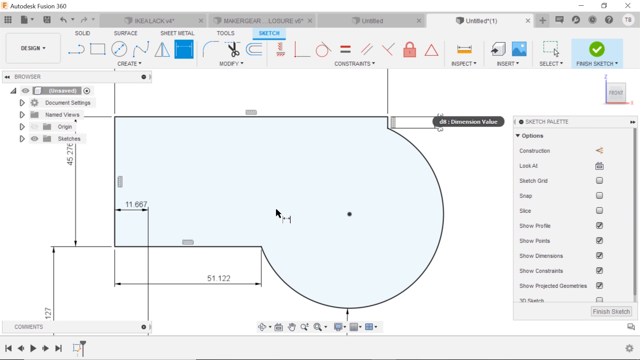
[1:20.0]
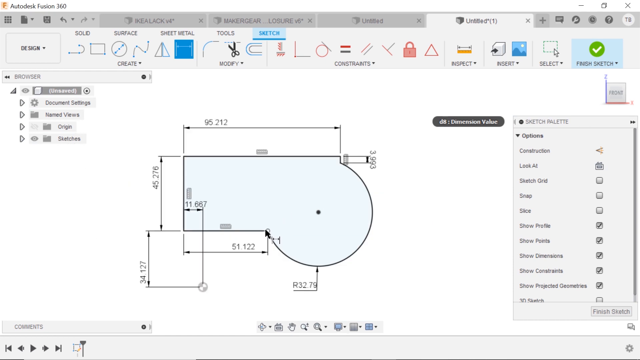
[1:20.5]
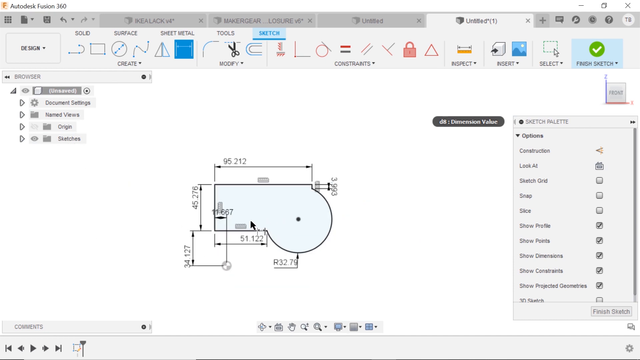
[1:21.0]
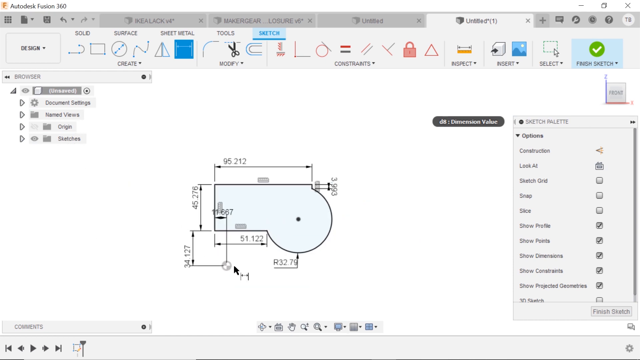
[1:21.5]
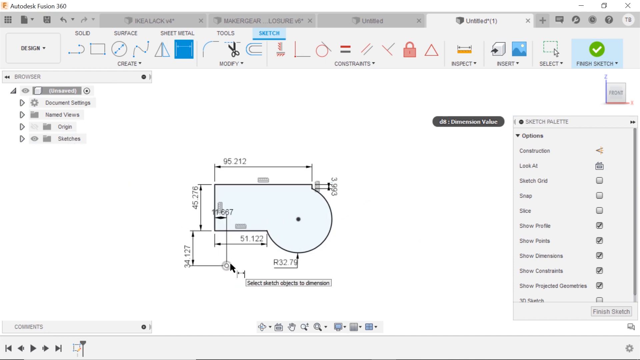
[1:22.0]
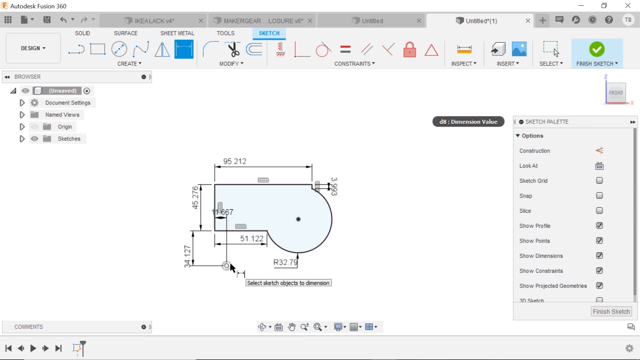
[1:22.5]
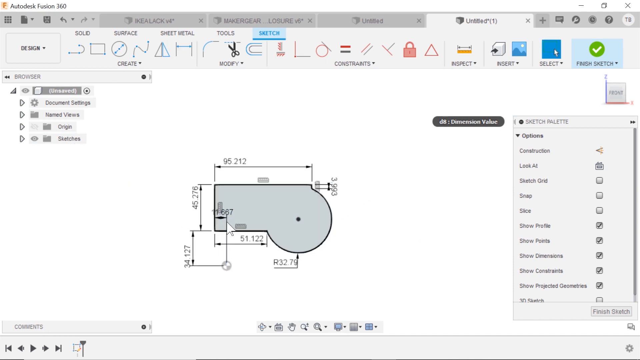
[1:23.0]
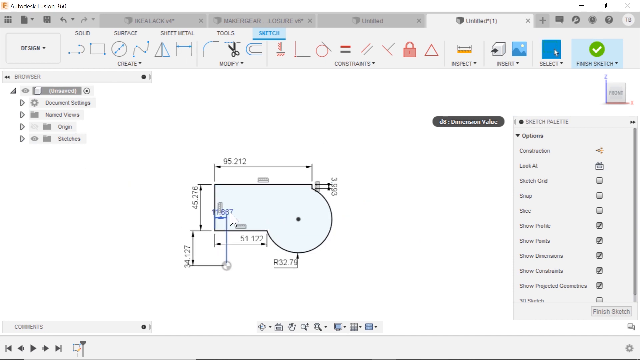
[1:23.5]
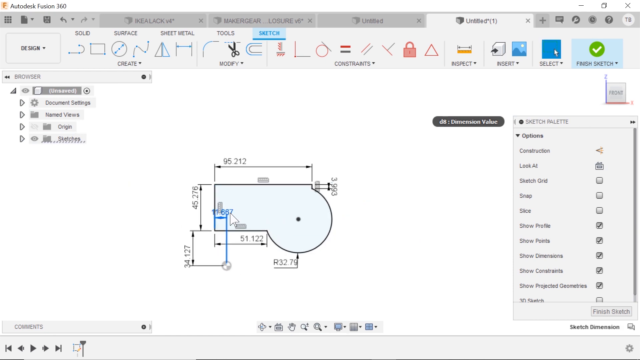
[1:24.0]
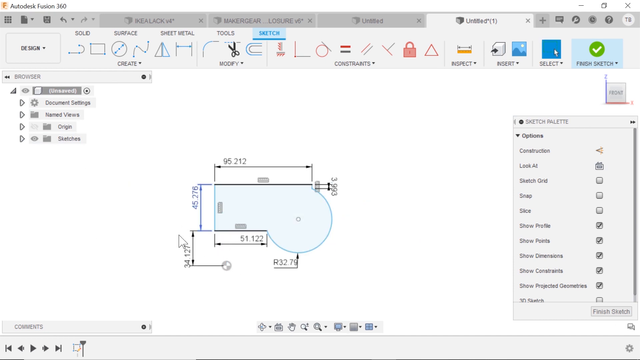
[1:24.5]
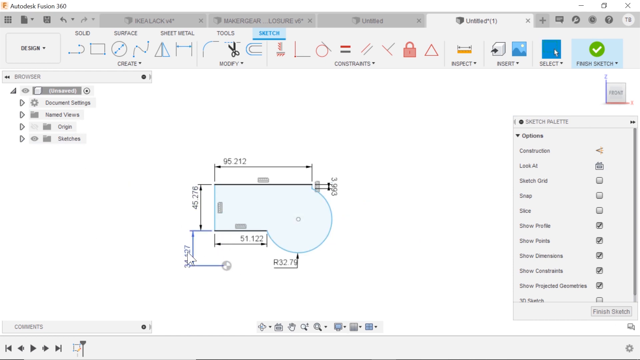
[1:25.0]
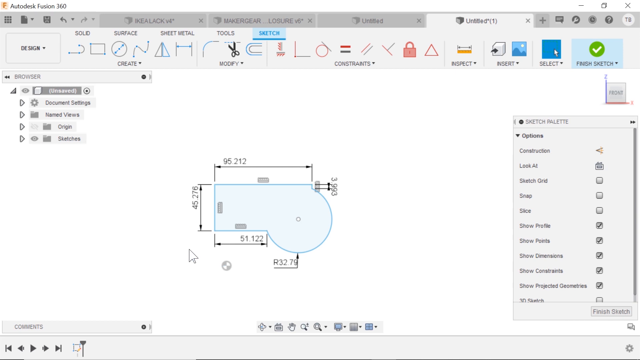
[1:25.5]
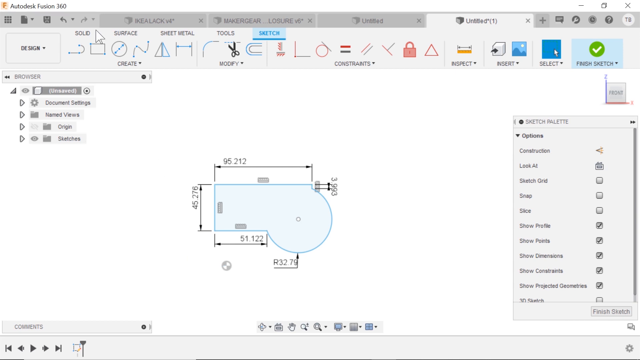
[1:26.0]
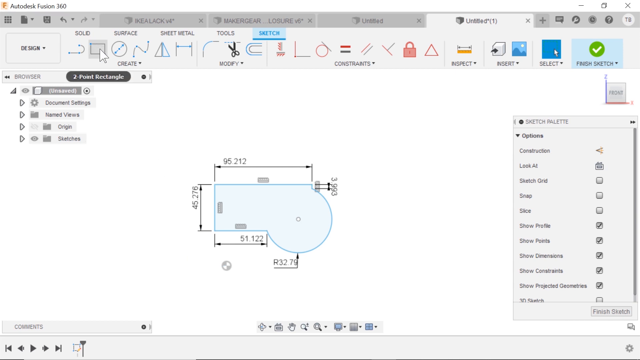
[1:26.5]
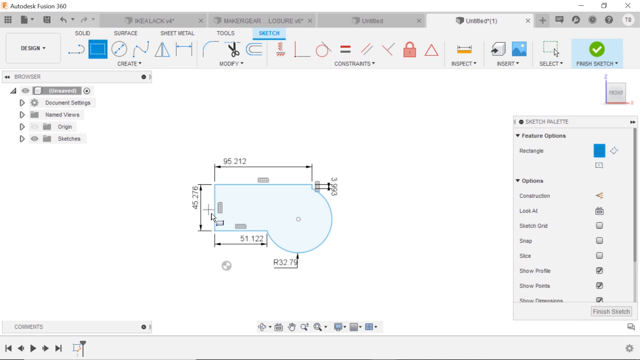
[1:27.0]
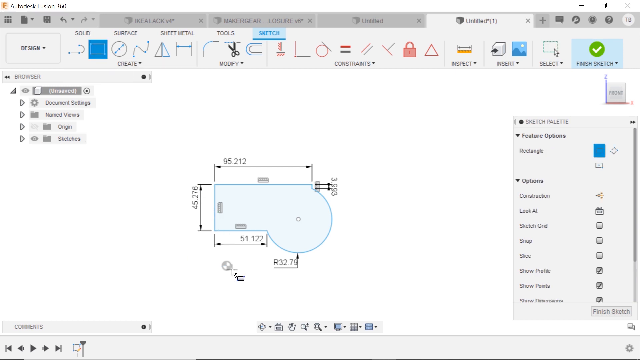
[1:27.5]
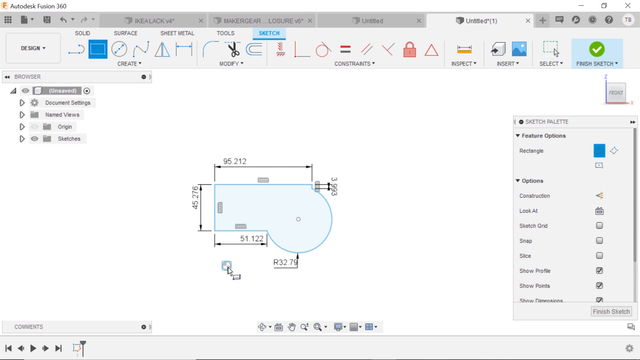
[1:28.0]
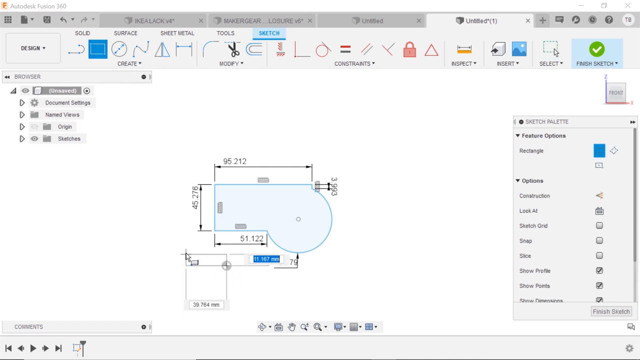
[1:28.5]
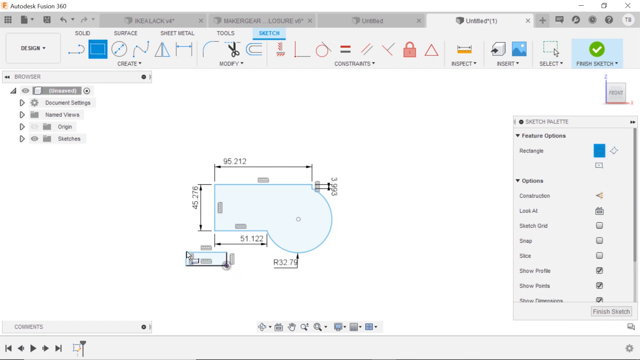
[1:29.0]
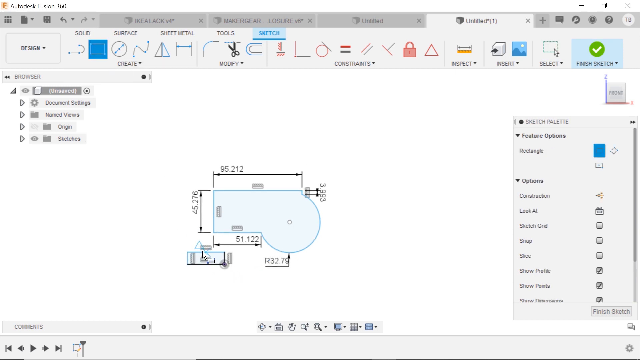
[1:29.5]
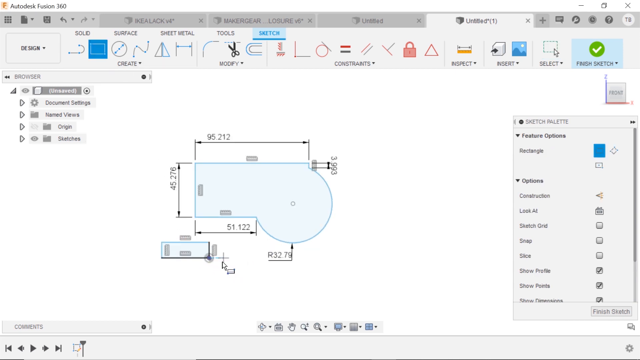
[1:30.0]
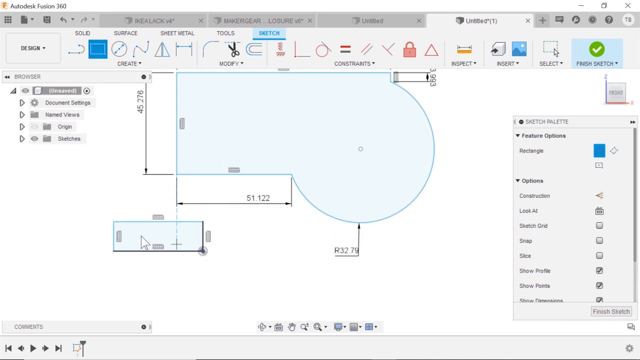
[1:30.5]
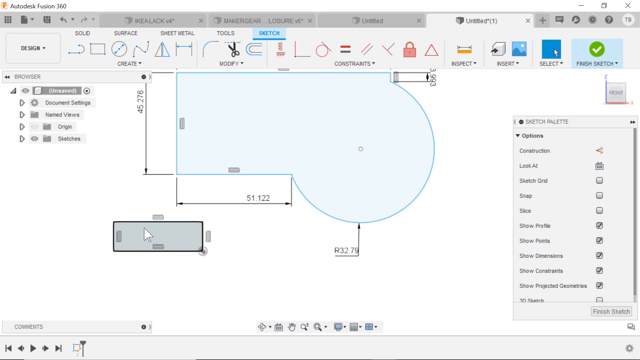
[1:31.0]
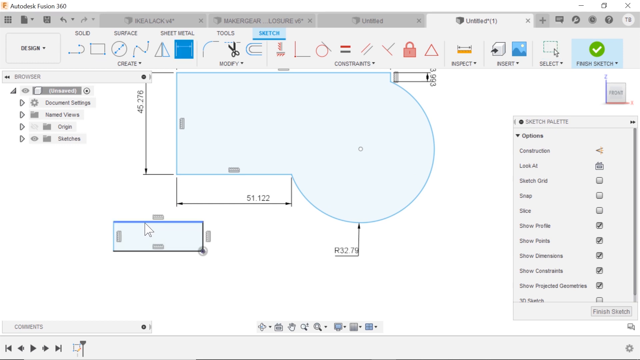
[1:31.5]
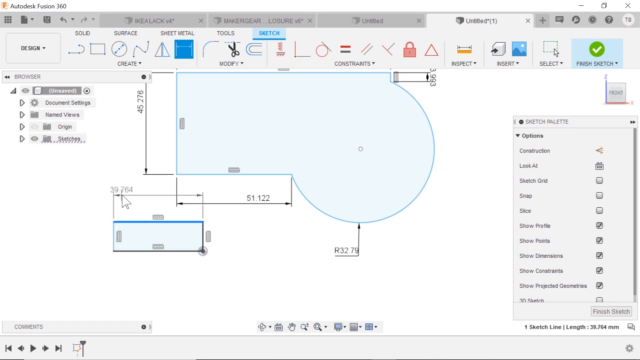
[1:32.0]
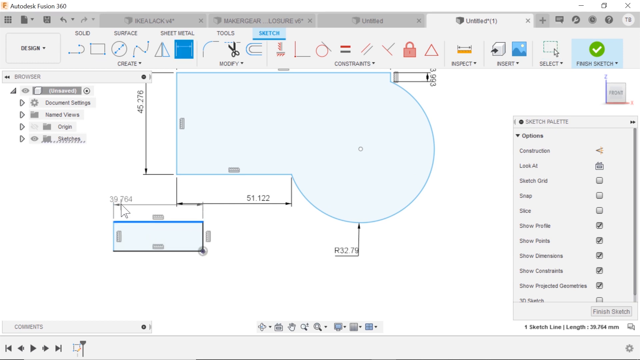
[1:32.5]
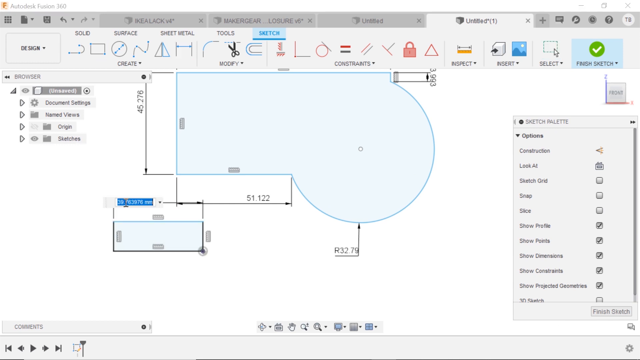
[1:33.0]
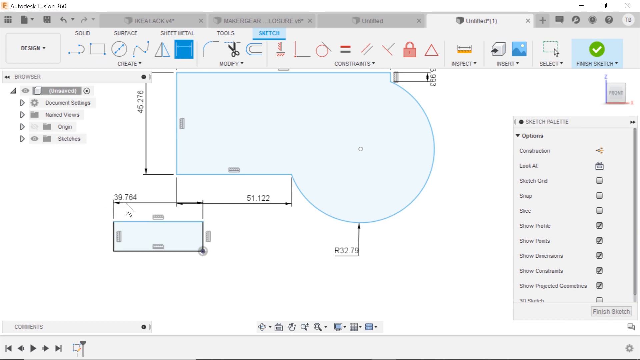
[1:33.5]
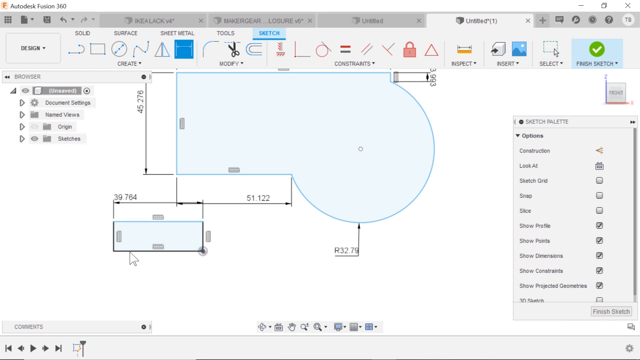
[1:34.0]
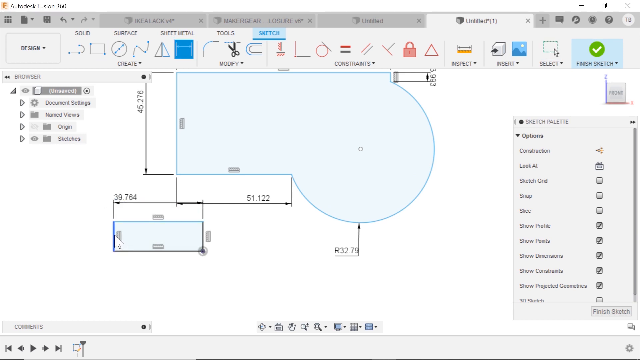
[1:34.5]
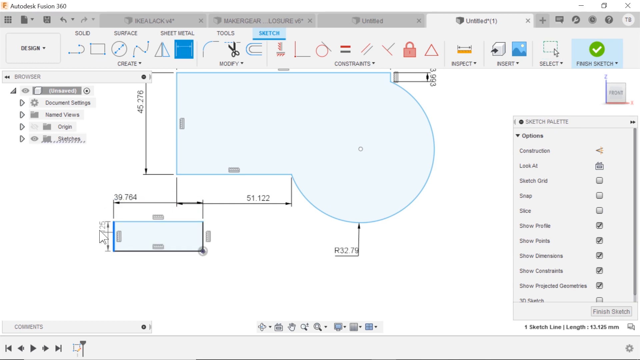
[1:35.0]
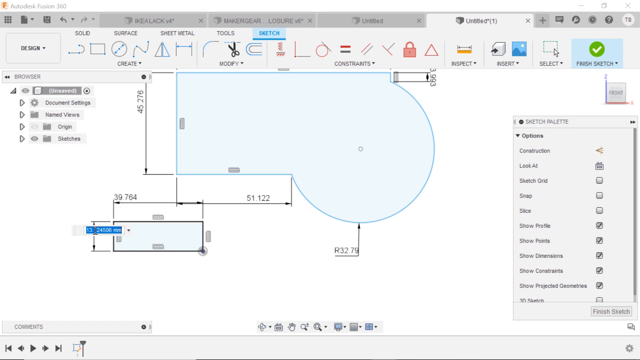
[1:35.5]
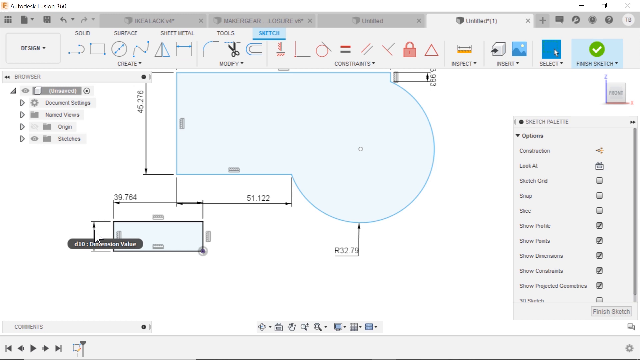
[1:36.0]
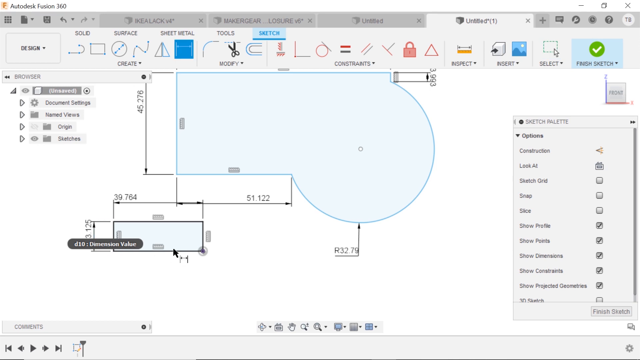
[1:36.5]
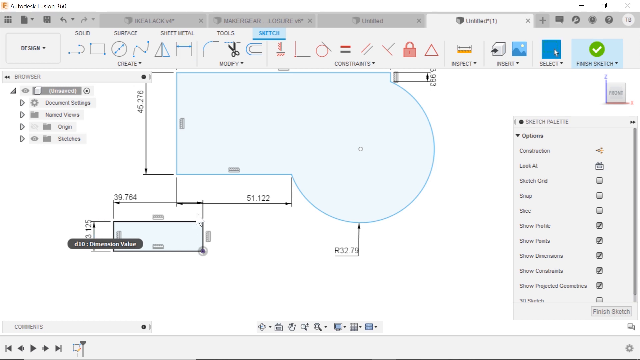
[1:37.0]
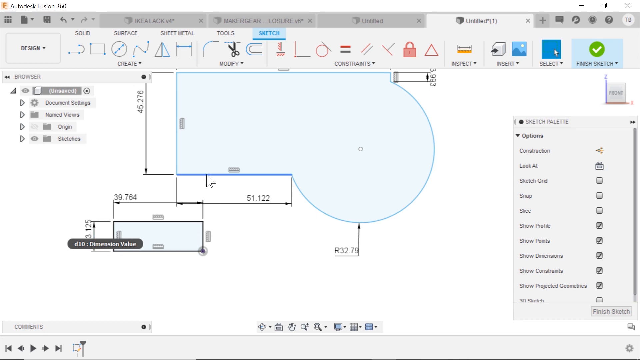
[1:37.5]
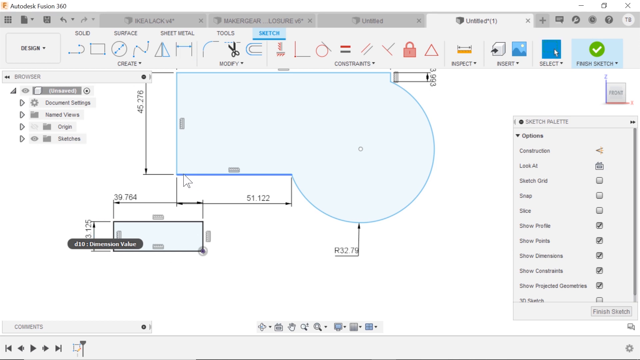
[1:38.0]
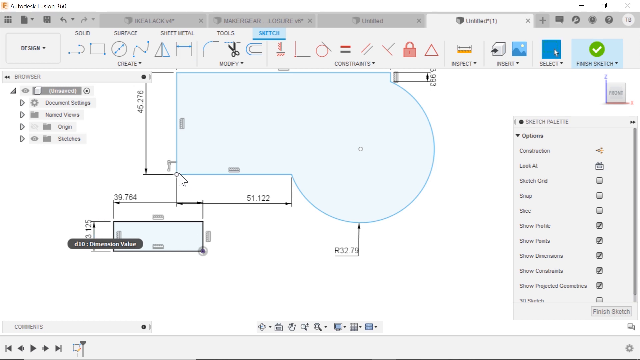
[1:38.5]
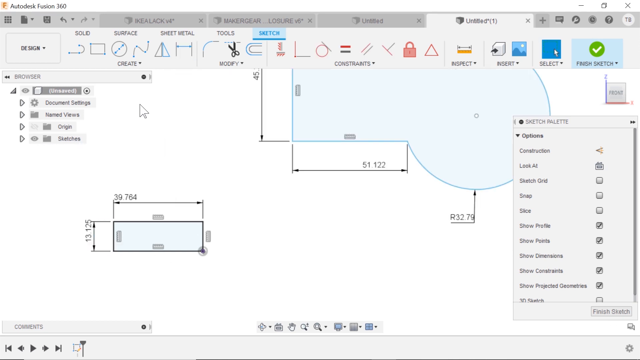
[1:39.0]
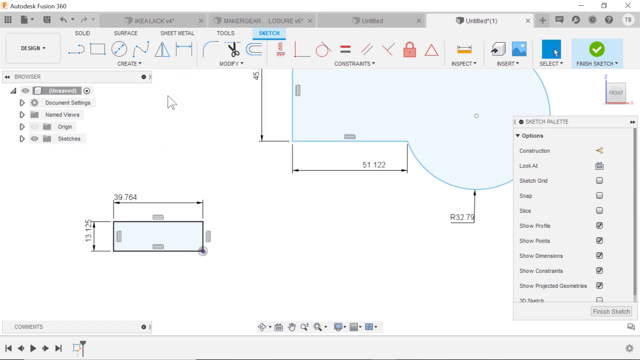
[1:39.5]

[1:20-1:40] The diagram is zoomed out so far that it barely takes up any of the screen. More measurements have been added, with additional lines measuring the outside of the shape. The mouse passes over each of them, then clicks one and it disappears. The mouse goes up to the menu at the top and clicks an icon showing a rectangle, then returns to the canvas and draws a rectangle at the lower left corner of the diagram. Each side of the new rectangle has a smaller gray-filled rectangle next to it. The user grabs the top edge of the rectangle and drags up; instead of reshaping it, this creates a horizontal line above the rectangle listing the width. The user appears to drag lines out from the top and the left to show the width and height of the newly drawn rectangle.